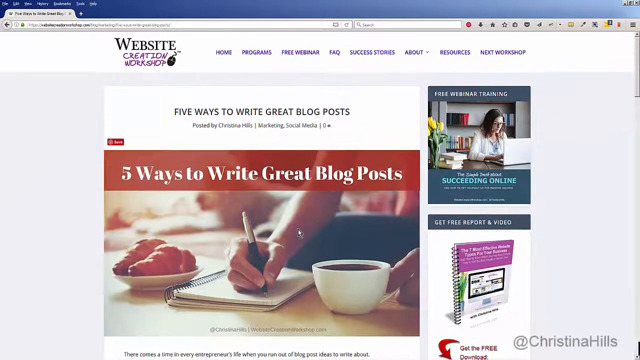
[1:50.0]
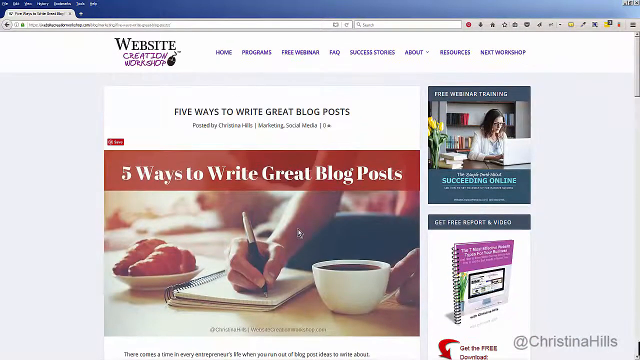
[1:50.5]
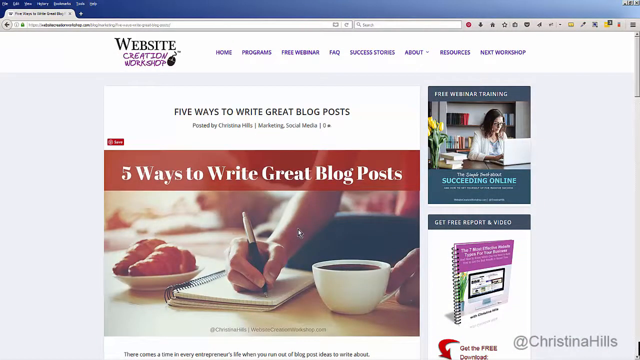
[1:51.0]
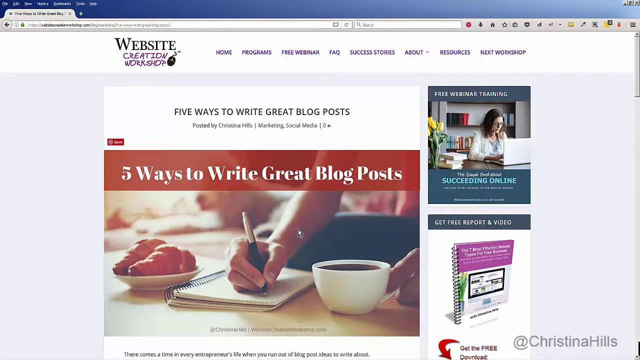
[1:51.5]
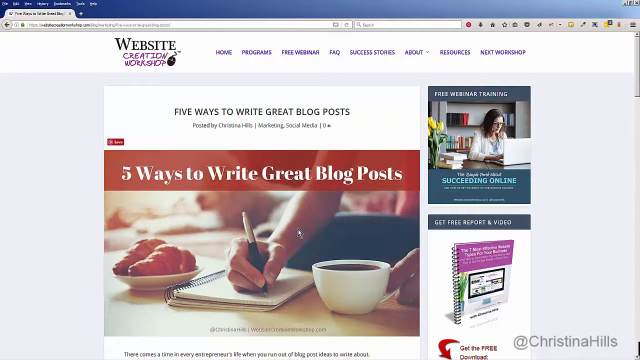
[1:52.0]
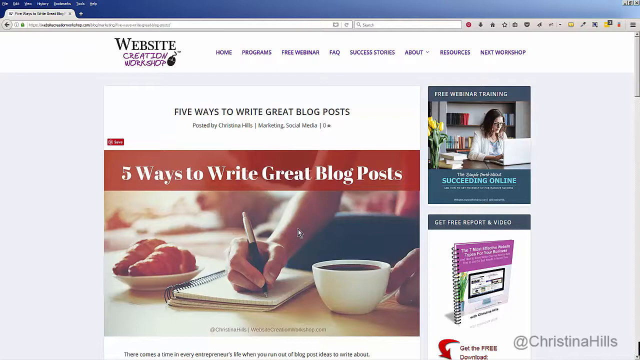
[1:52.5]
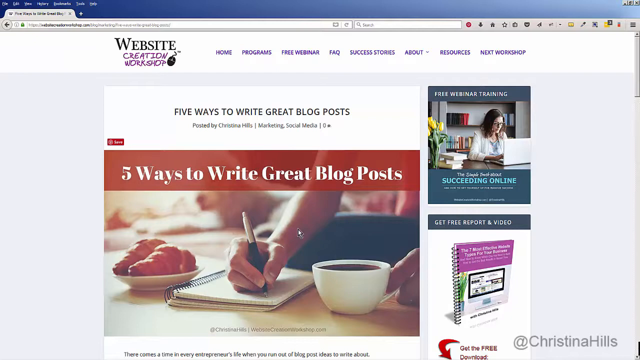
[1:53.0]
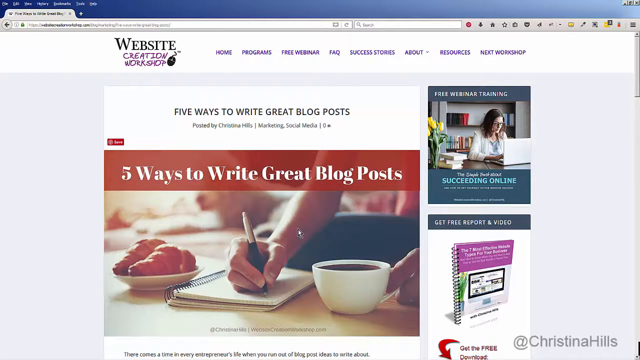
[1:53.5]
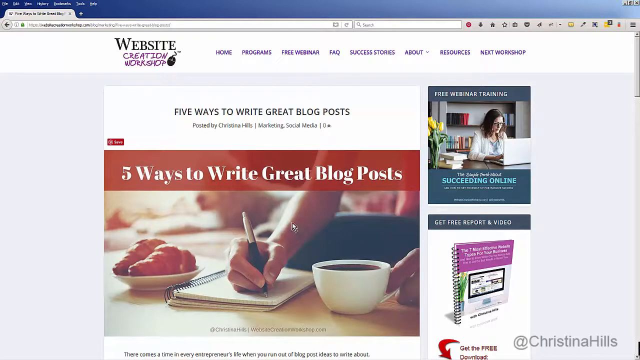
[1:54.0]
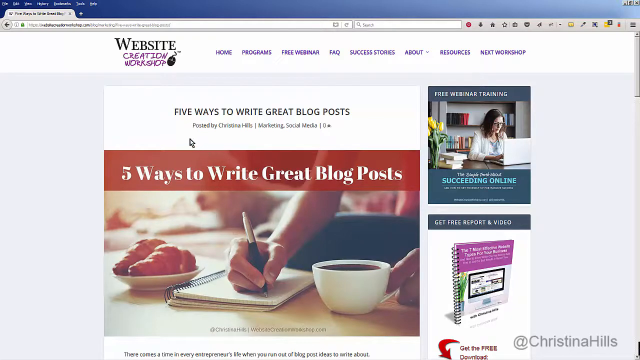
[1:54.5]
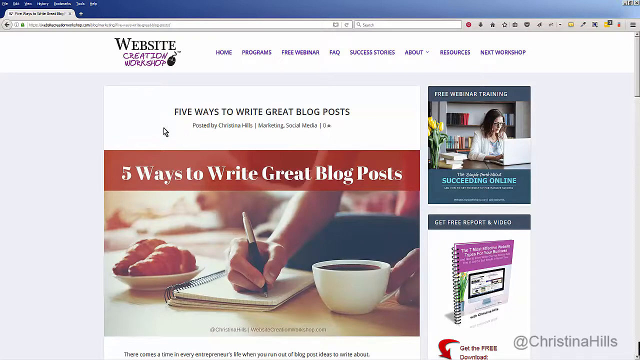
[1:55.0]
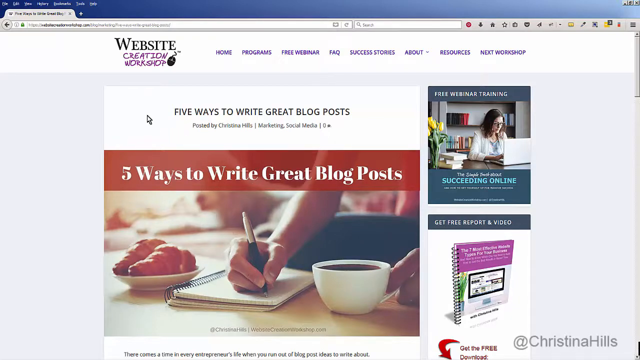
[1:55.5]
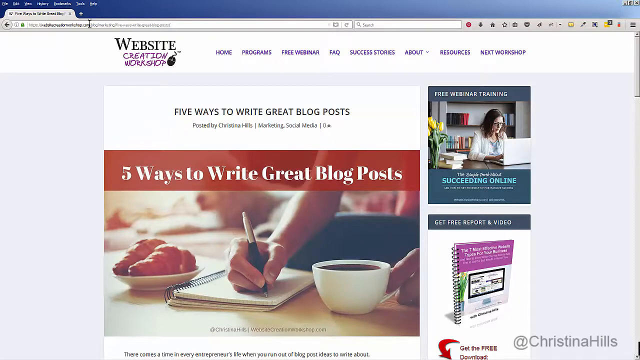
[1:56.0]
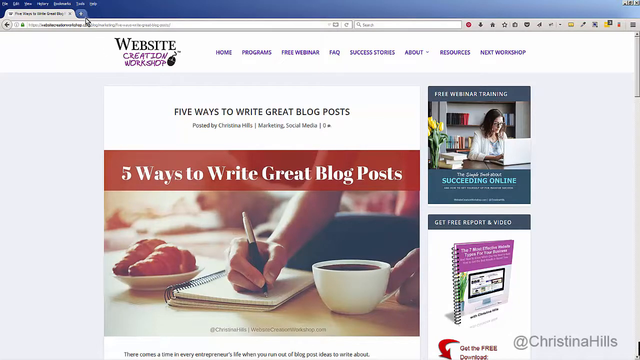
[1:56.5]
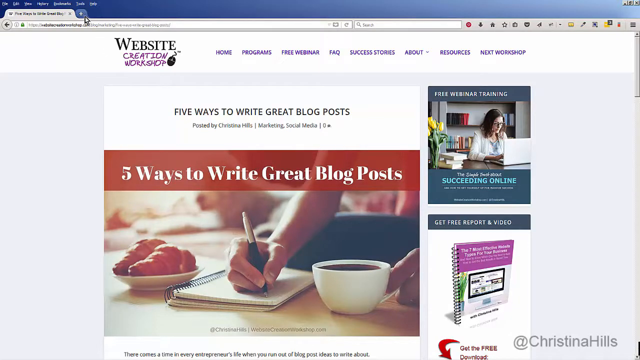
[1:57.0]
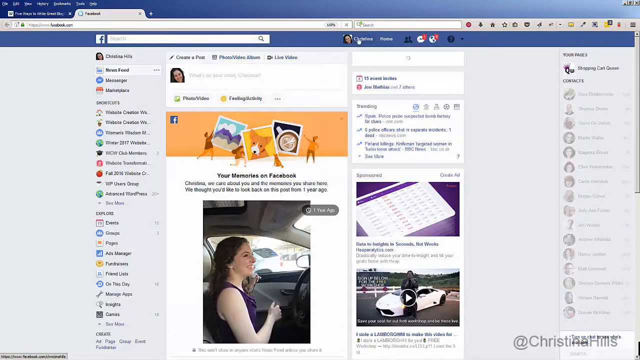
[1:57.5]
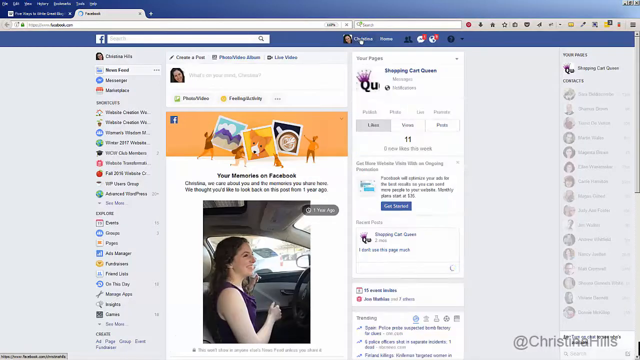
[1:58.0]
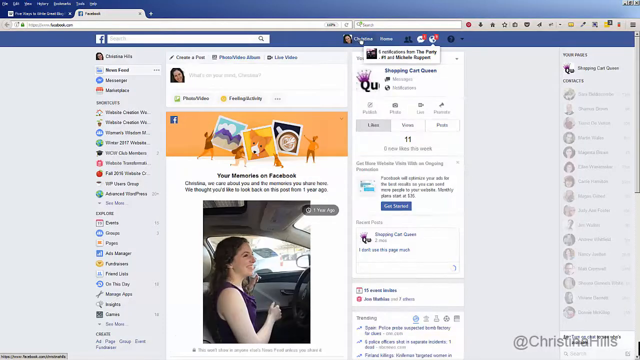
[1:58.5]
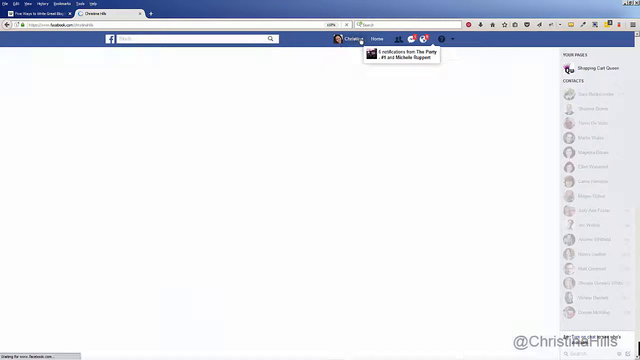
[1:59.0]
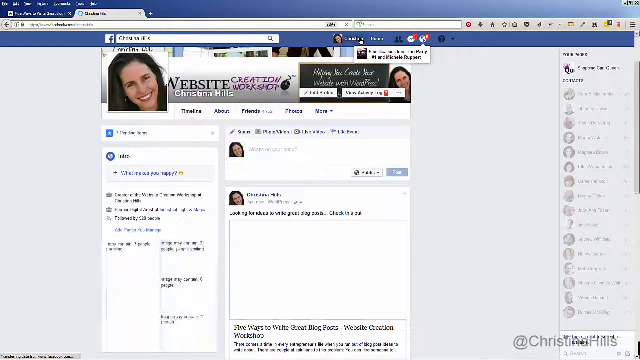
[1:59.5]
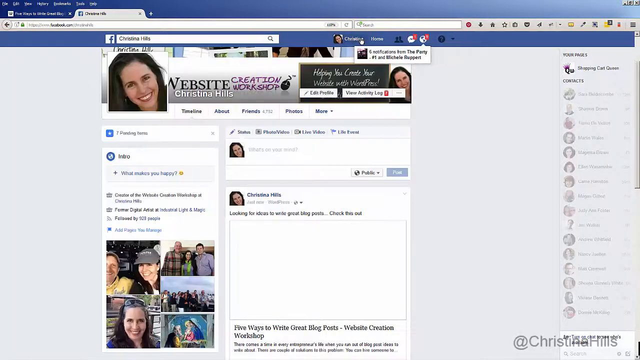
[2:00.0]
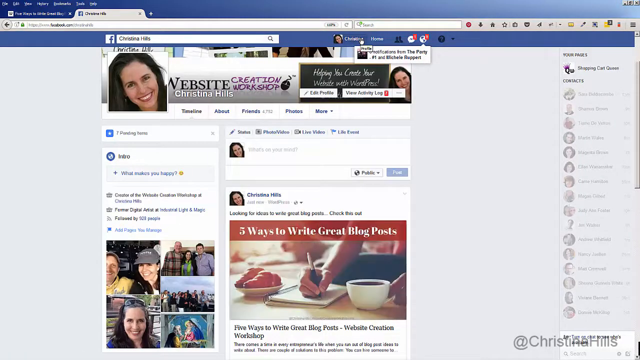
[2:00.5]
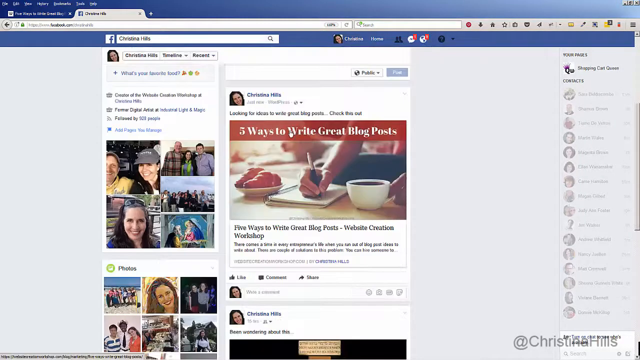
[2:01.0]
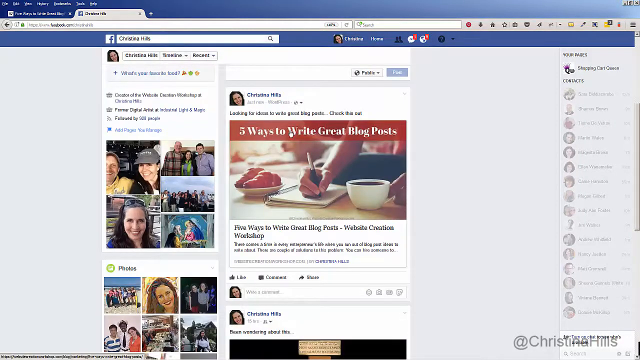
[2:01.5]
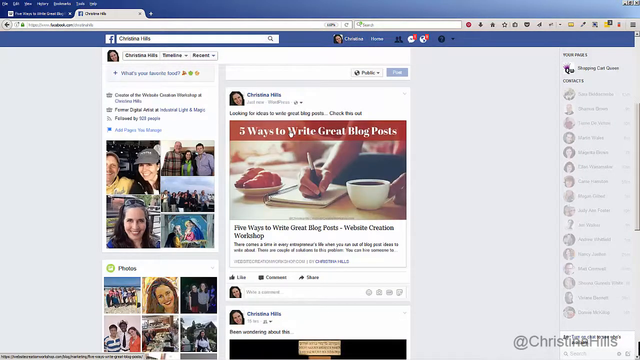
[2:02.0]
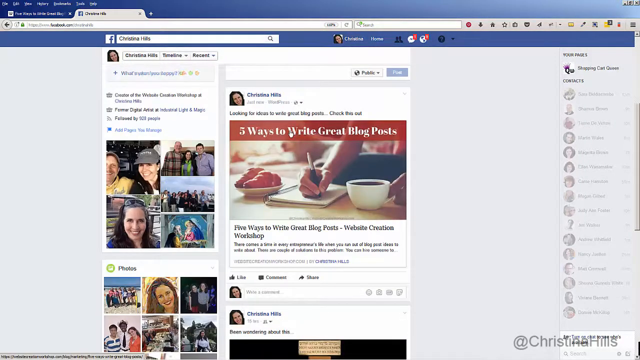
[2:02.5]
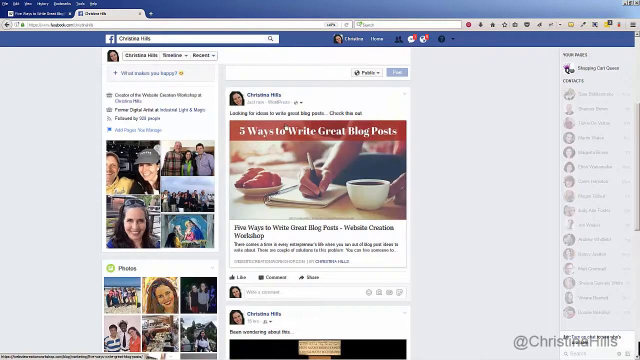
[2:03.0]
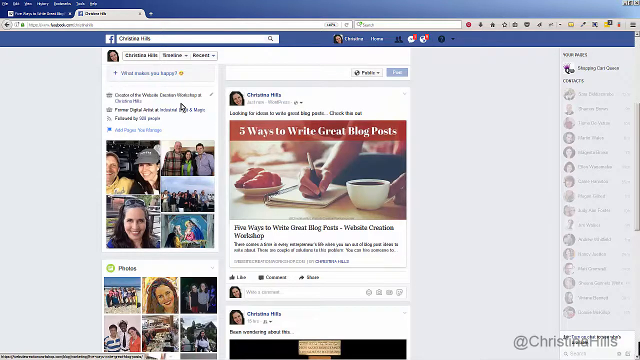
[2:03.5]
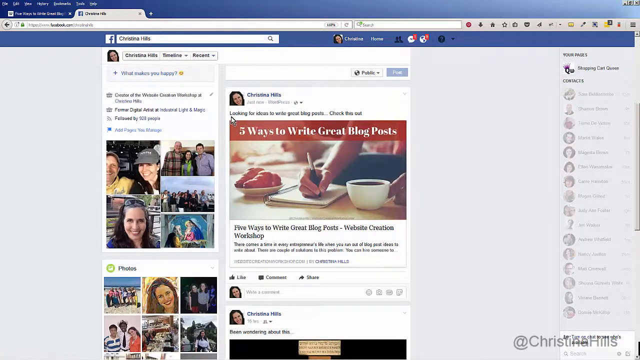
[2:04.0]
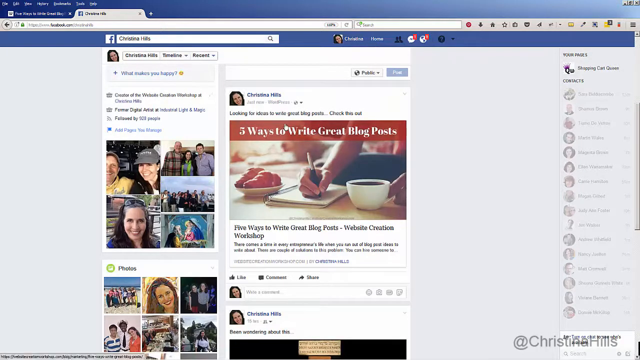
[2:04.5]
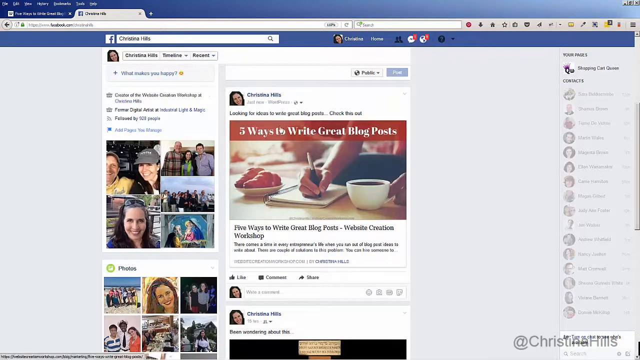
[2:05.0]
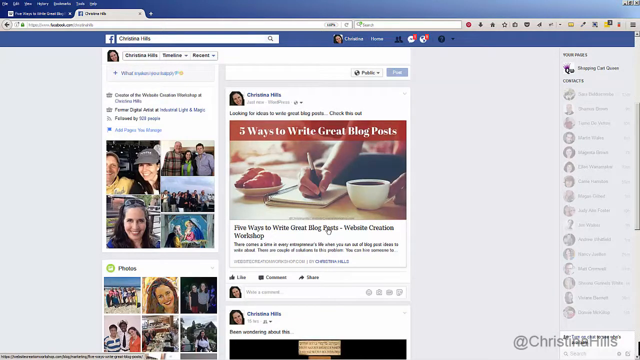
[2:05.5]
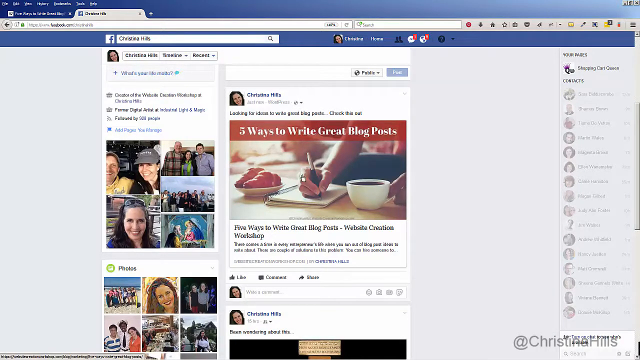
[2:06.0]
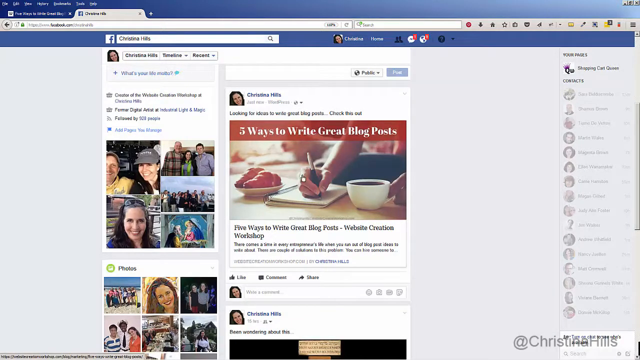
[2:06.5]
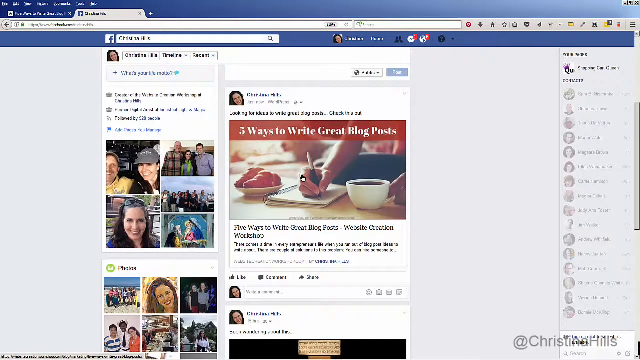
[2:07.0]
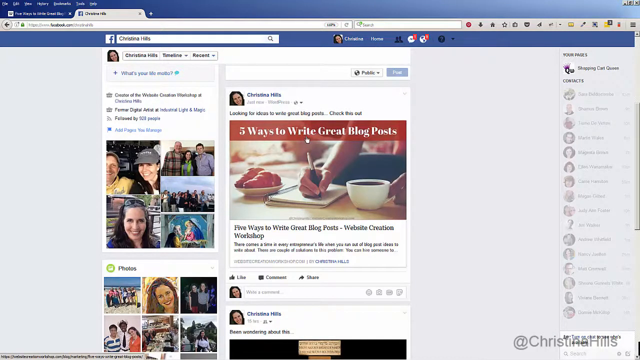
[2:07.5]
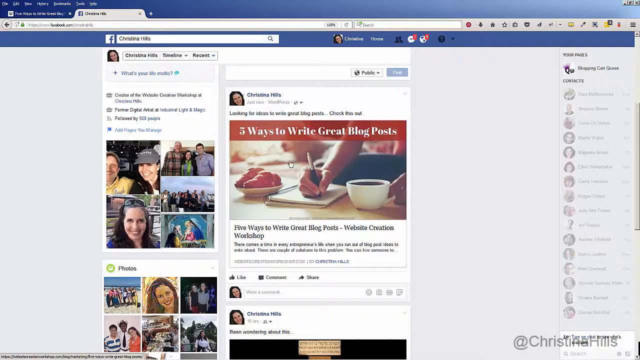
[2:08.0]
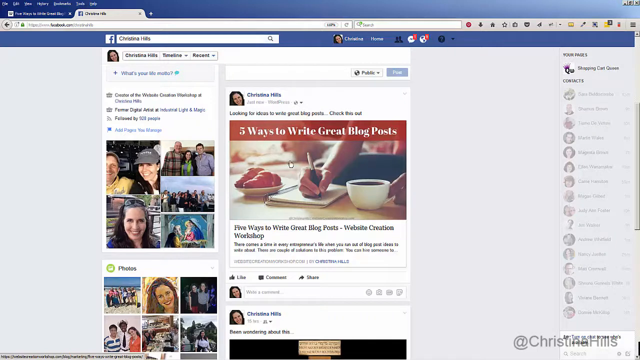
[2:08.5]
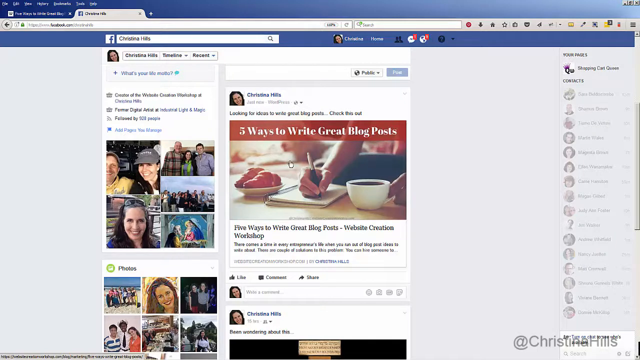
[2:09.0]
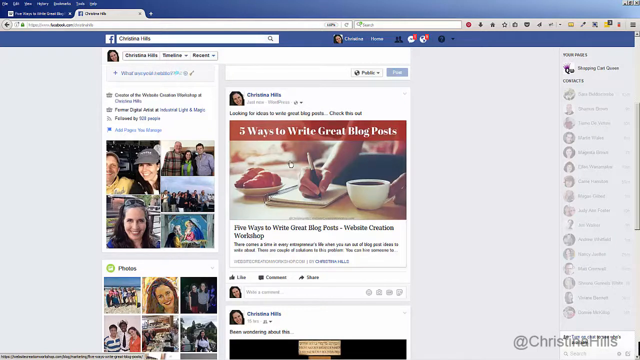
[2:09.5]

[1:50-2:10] Someone who has posted an article to Facebook opens their Facebook page to see that the article is there. A computer screen has one open tab, on a site called Website Creation Workshop, showing the article "5 Ways to Write Great Blog Posts," posted by Christina Hills Marketing and Social Media. Below the title is a photograph of someone holding a pen and writing in a notebook resting on a table, holding a white coffee cup in their left hand, with a plate of two croissants next to the notebook on the other side. The cursor clicks the plus sign next to the tab to open a second tab, Facebook, showing Christina Hills' Facebook page. It is also entitled Website Creation Workshop, above her name and next to a photograph of her, and below appears the new post with the article. Additional photographs with people are on the left side, and the cursor moves over the page as it scrolls down slightly.